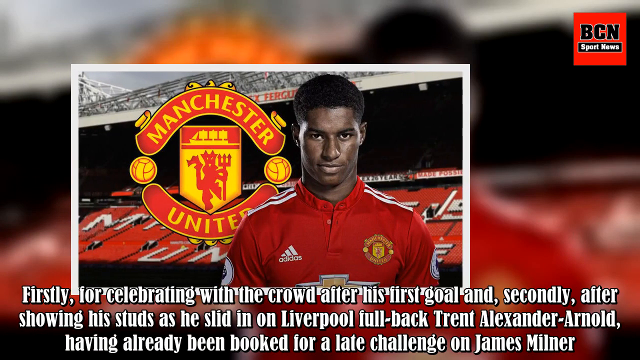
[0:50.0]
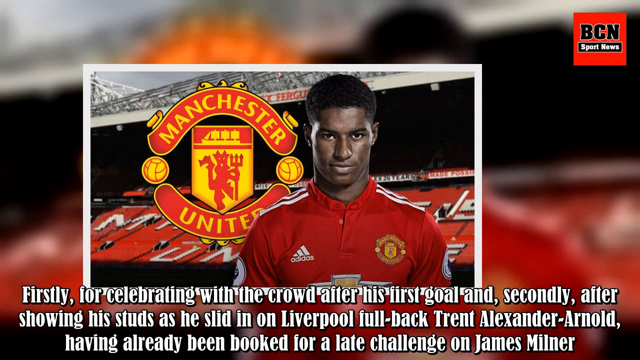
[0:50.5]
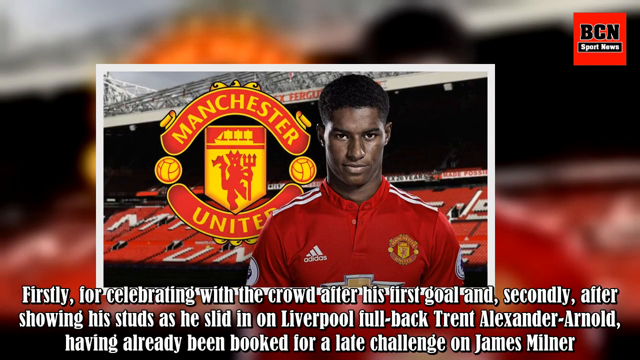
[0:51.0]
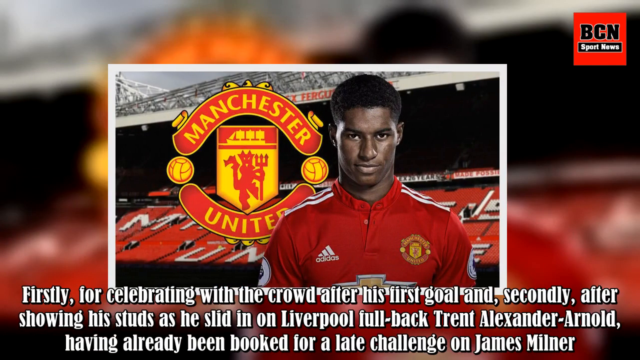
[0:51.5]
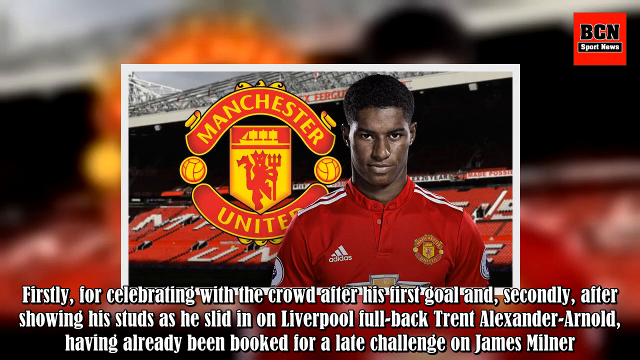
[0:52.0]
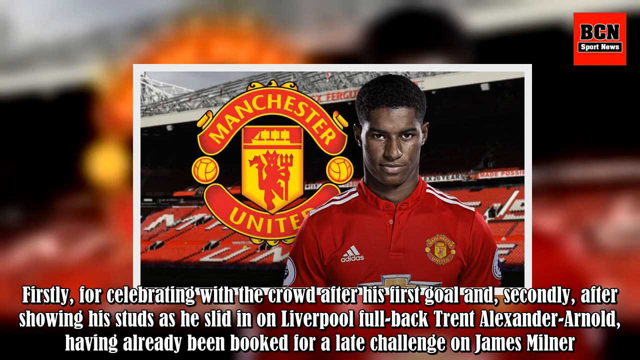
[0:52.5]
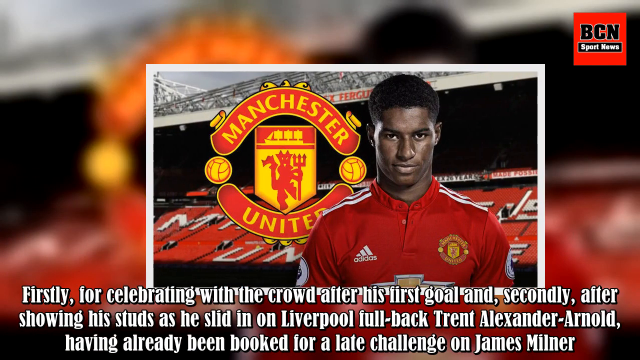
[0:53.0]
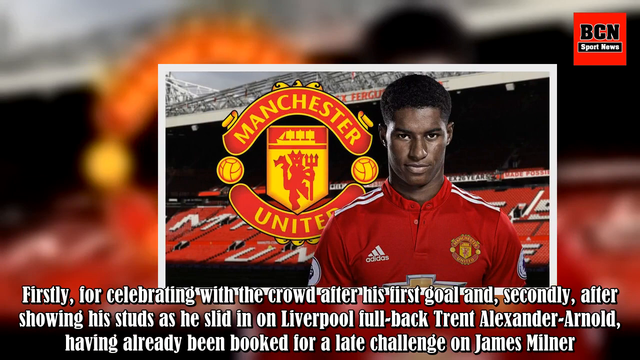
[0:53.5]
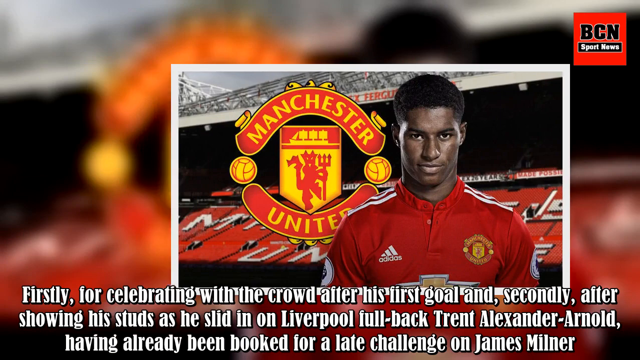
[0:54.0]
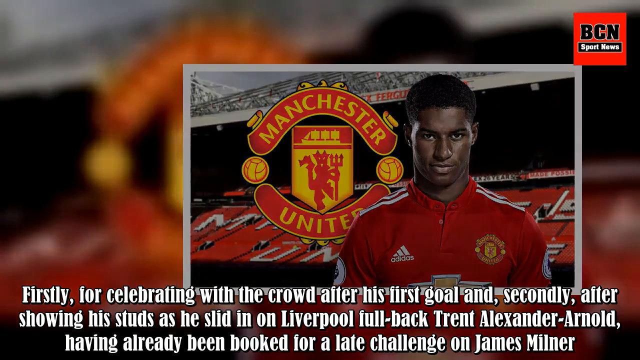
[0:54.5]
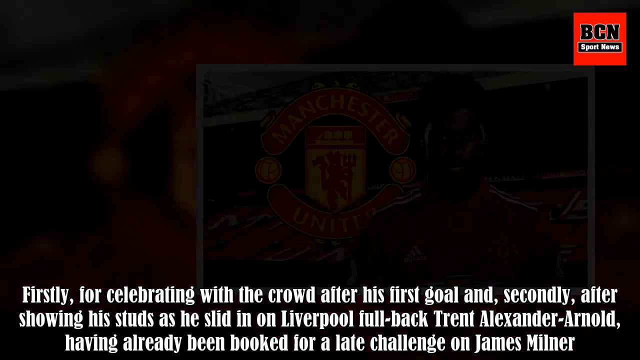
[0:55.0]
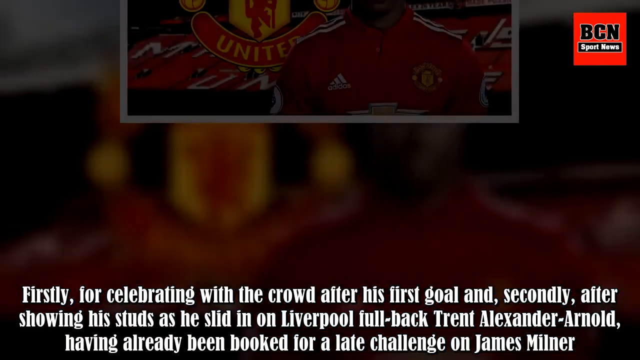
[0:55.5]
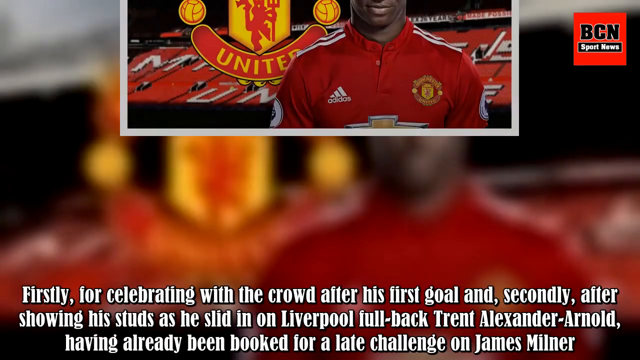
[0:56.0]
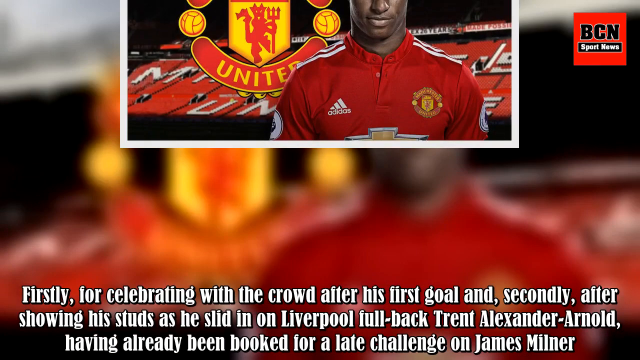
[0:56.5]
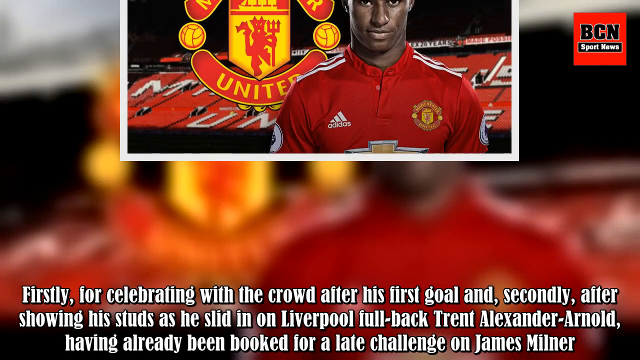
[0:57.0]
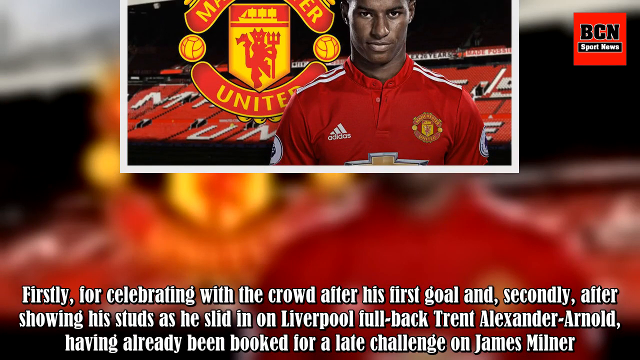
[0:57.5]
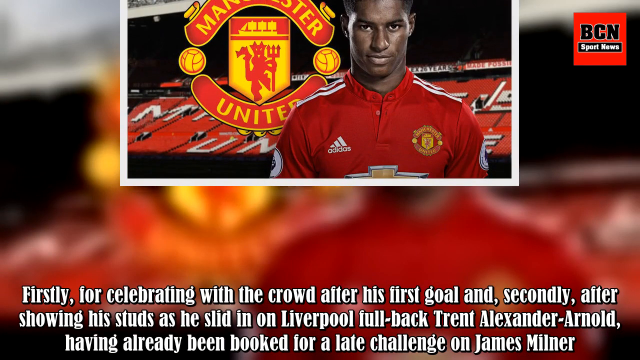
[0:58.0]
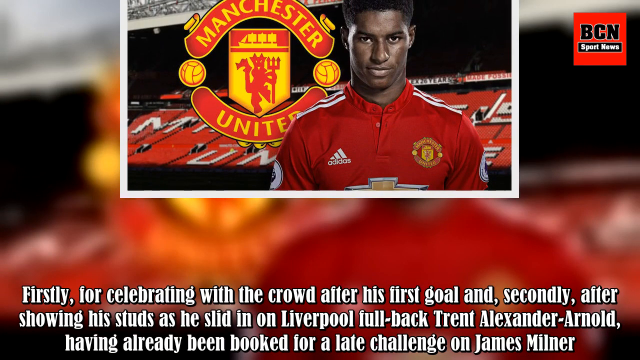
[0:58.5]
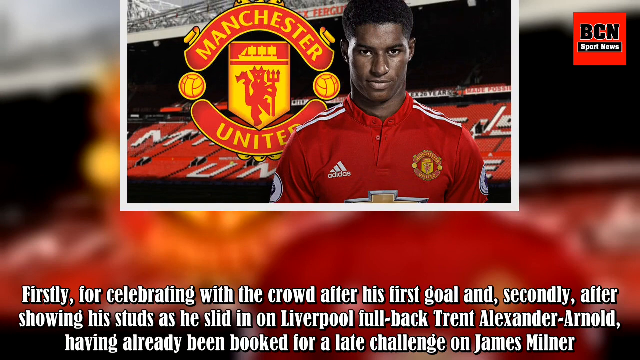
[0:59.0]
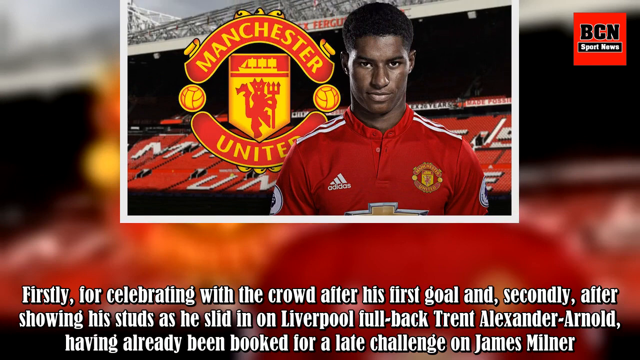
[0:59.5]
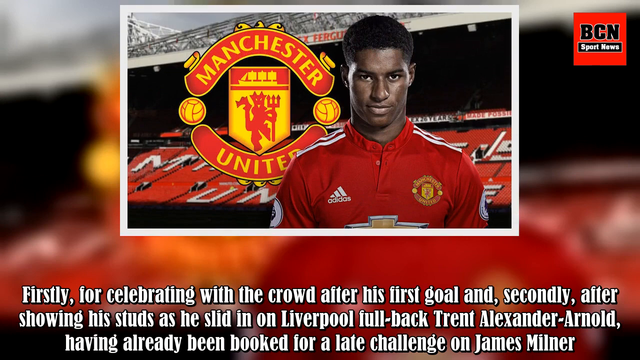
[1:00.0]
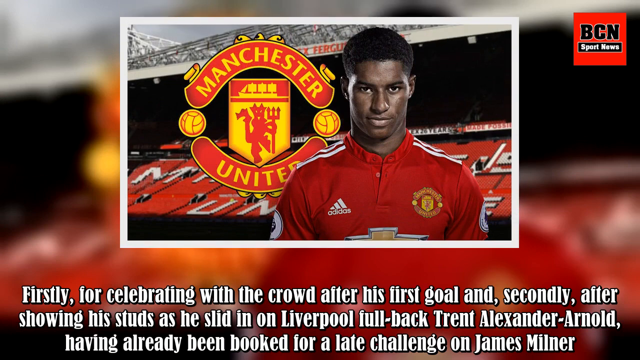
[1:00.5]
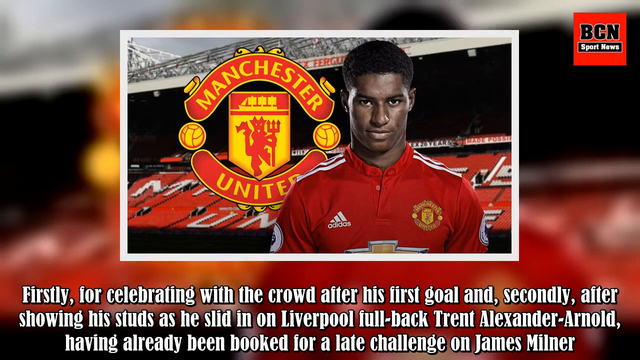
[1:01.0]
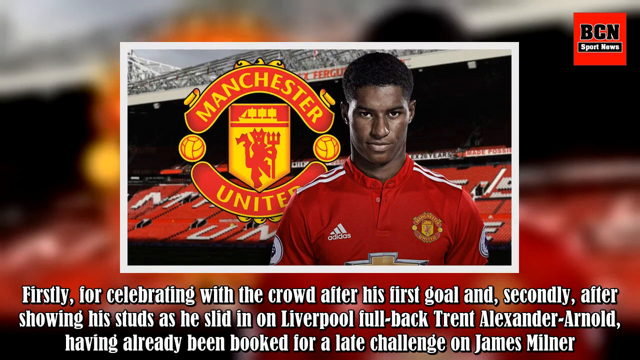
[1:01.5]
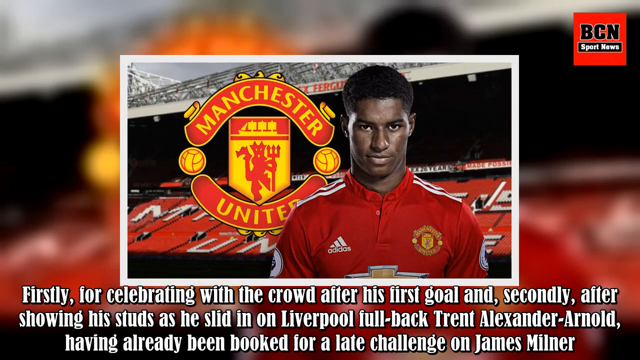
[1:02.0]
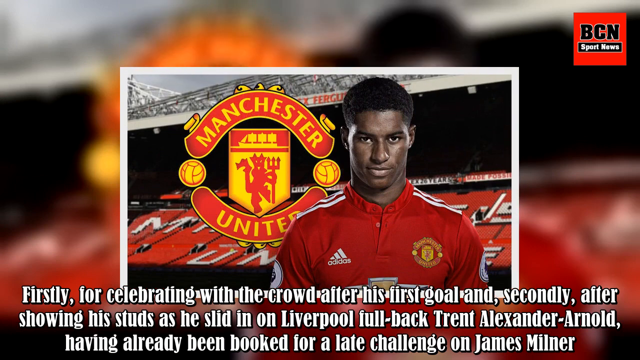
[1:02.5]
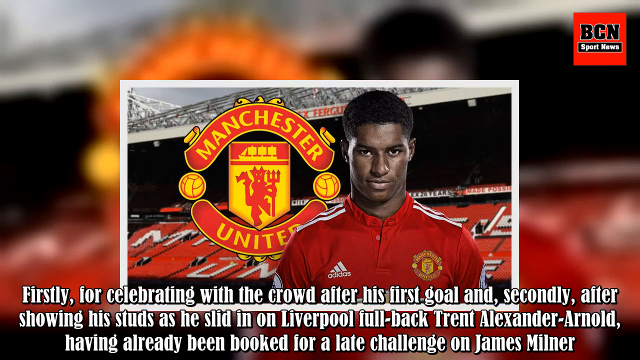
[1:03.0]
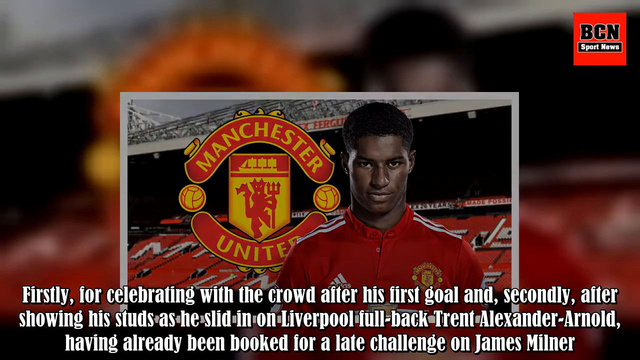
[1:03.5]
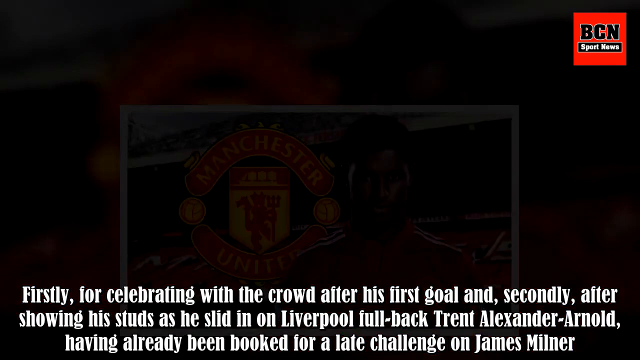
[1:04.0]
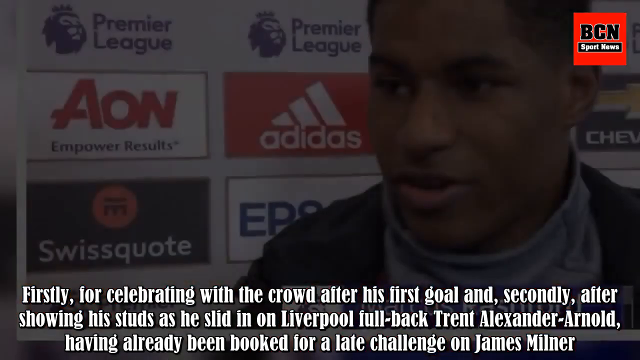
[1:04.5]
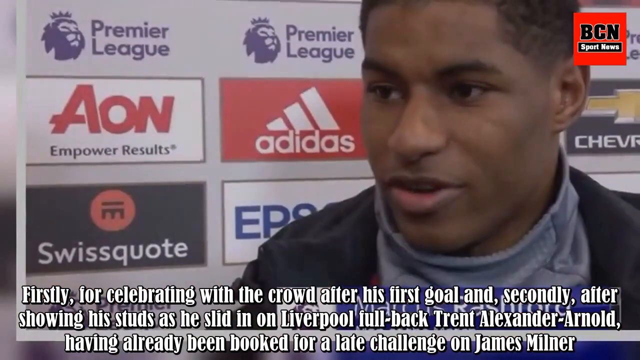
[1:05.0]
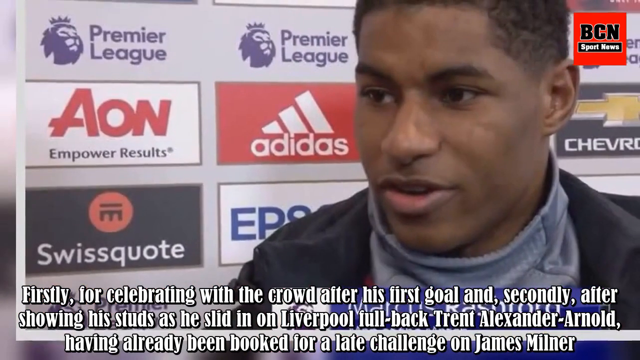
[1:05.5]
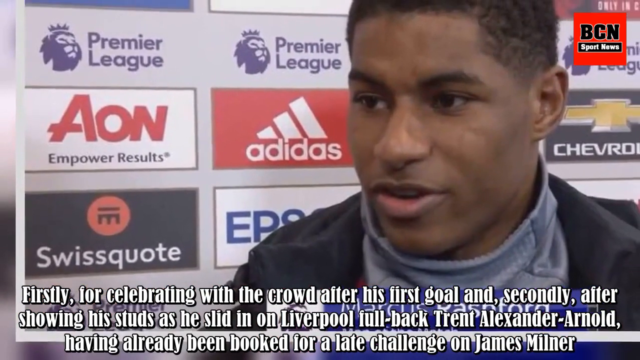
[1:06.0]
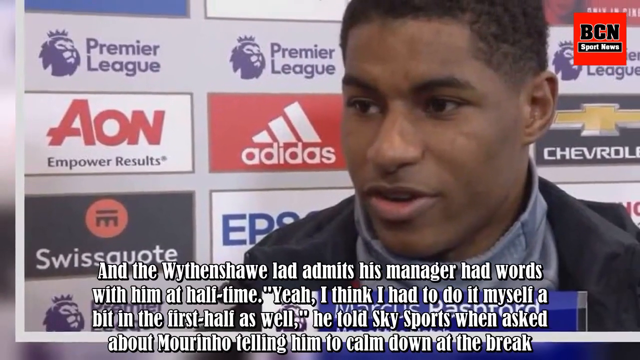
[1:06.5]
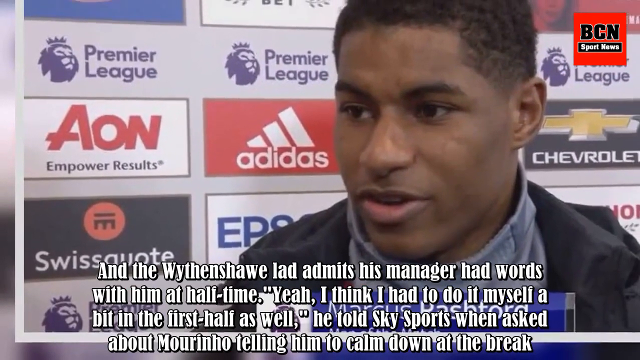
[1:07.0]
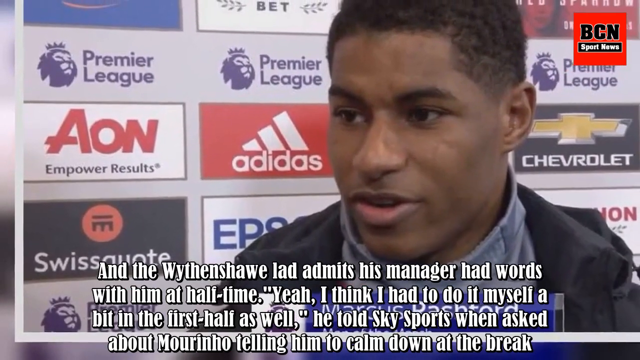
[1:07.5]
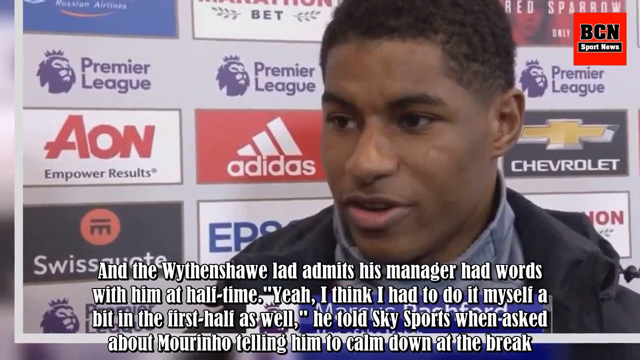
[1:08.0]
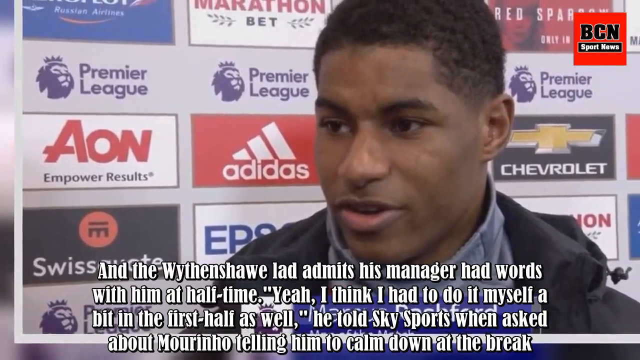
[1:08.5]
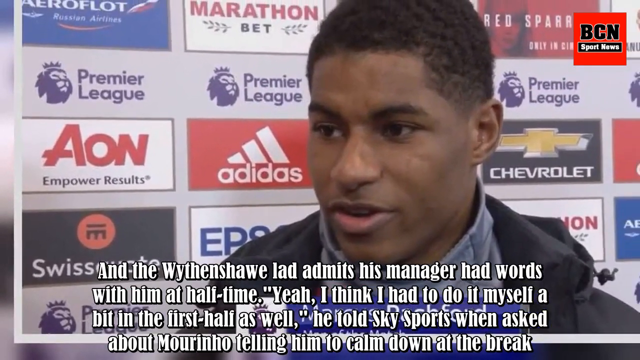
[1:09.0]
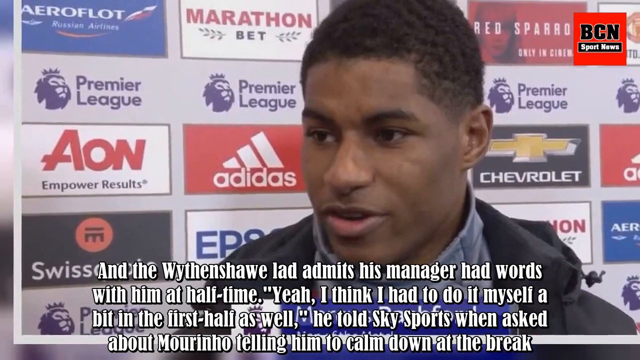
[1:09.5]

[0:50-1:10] What looks like a profile picture of an individual is shown with the Manchester United emblem, a computer-graphic-like lion holding a pitchfork. The individual wears the red uniform with the Chevrolet emblem in the middle, the Adidas sign on the right chest area and the Manchester emblem on the left. Text reads "firstly for celebrating with the crowd after his first goal and secondly after showing his studs as he slid in on Liverpool fullback Trent Alexander Arnold," followed by another sentence. The picture moves up and down out of the frame, and the view pans to another segment showing the individual out of uniform, seemingly in regular clothes, with advertisements such as Adidas and Chevrolet behind them. They are possibly outside or in a studio, and it looks as though they are talking to another reporter who cannot be seen.